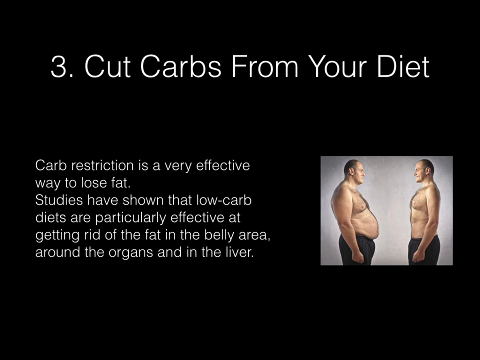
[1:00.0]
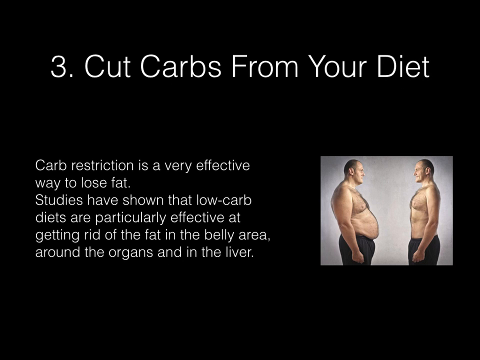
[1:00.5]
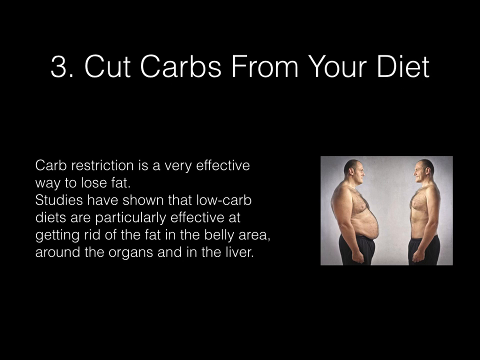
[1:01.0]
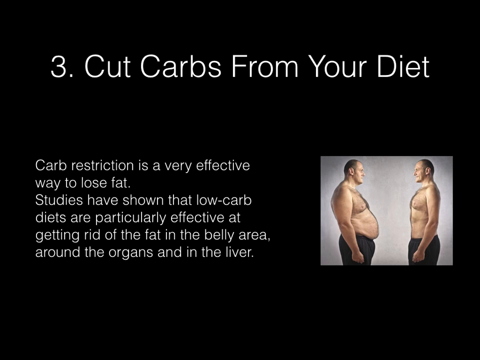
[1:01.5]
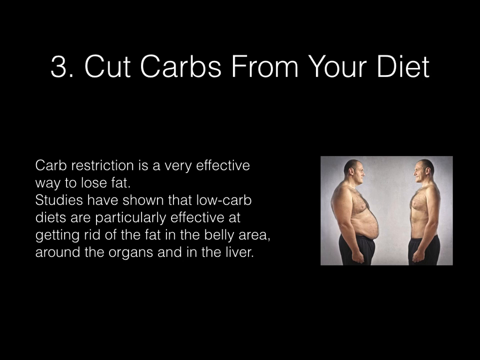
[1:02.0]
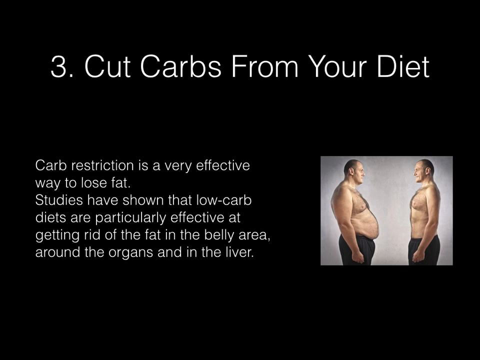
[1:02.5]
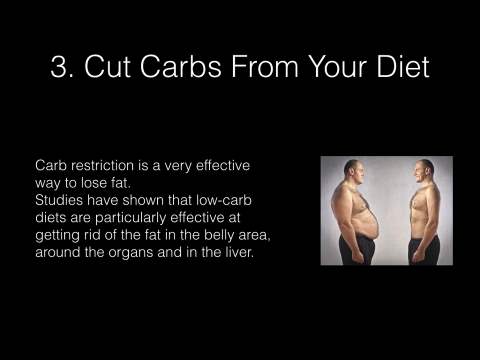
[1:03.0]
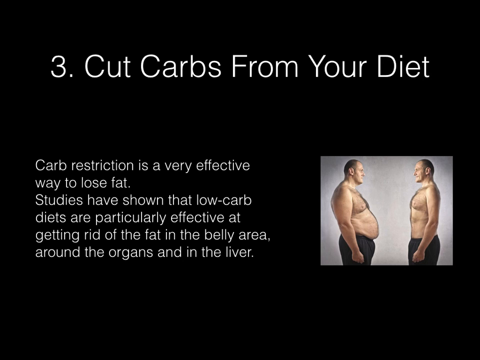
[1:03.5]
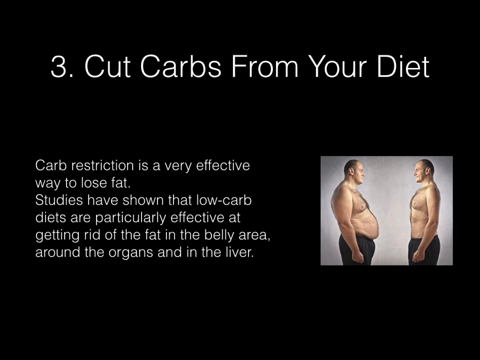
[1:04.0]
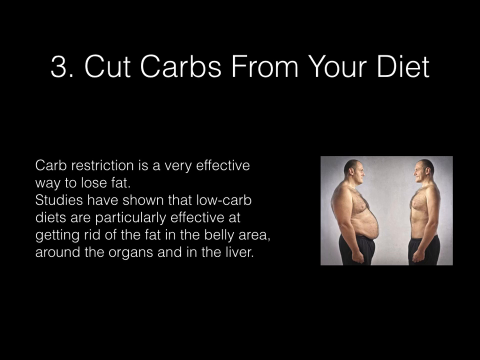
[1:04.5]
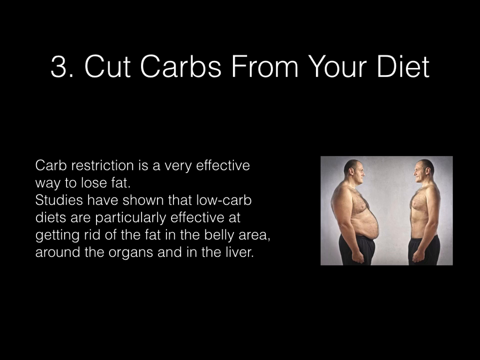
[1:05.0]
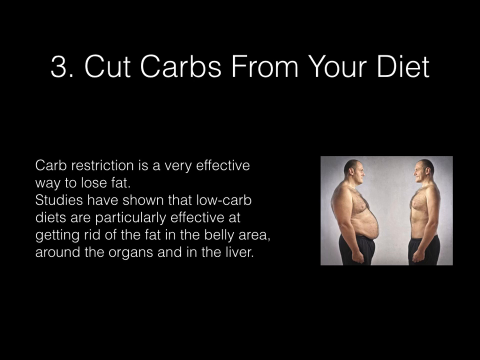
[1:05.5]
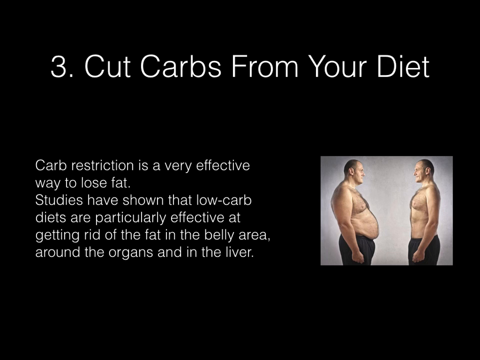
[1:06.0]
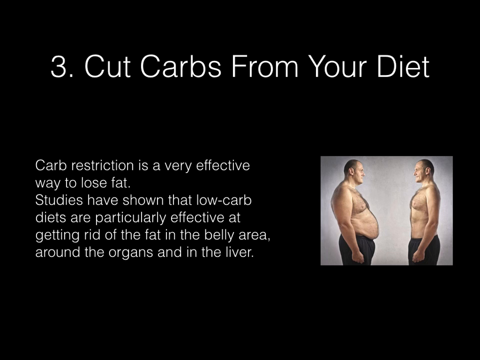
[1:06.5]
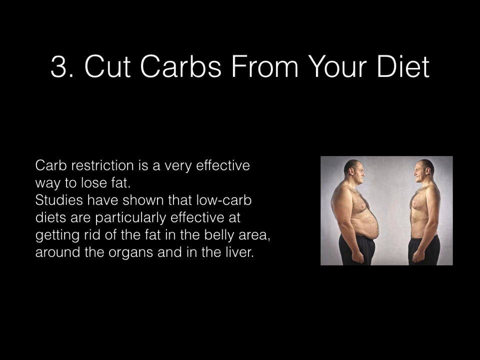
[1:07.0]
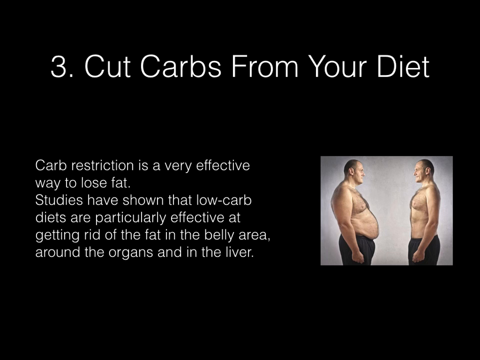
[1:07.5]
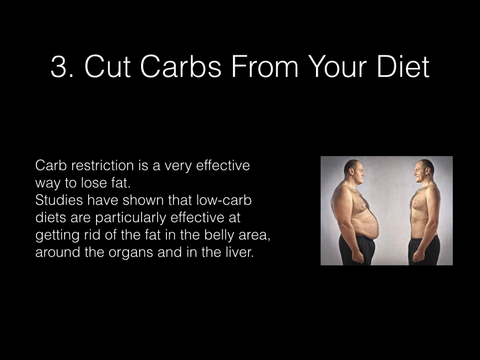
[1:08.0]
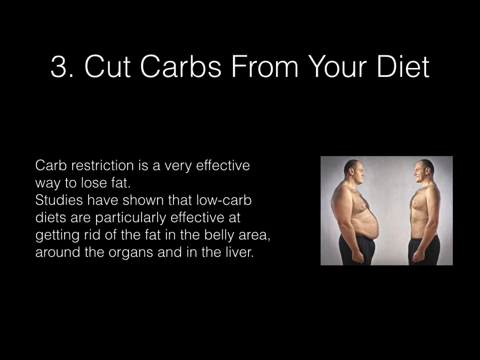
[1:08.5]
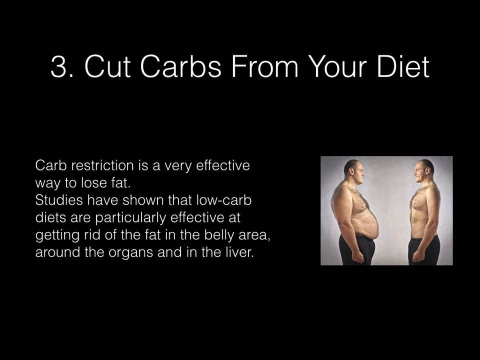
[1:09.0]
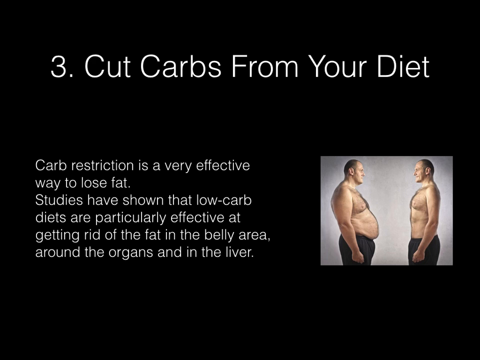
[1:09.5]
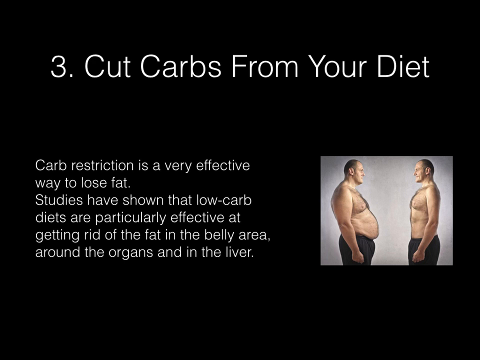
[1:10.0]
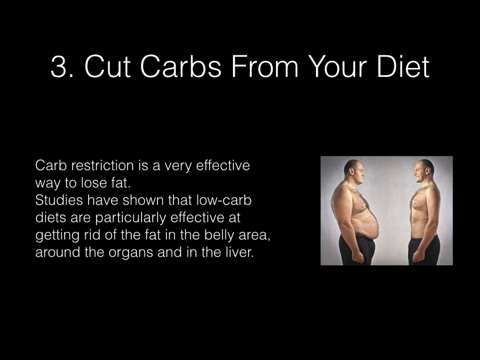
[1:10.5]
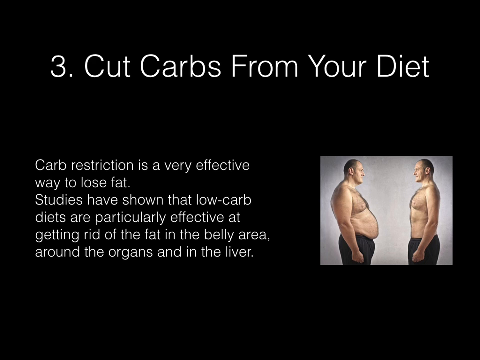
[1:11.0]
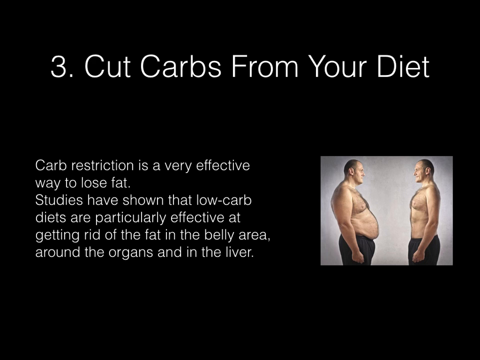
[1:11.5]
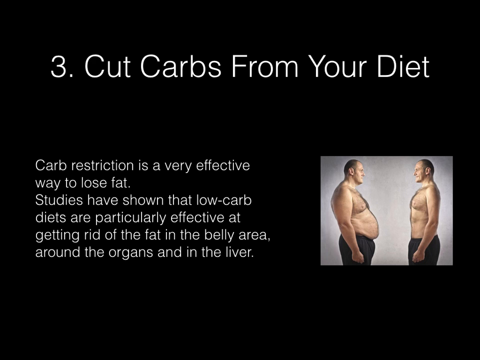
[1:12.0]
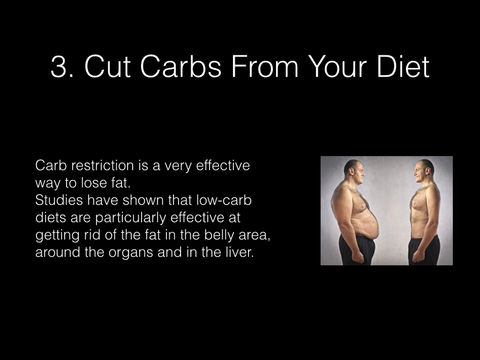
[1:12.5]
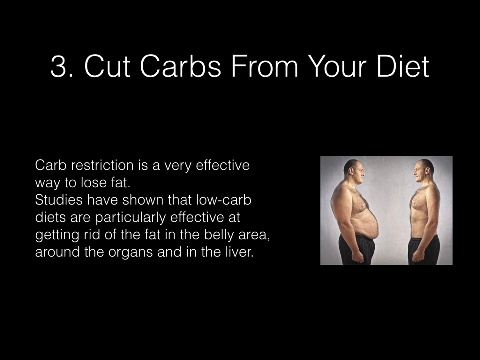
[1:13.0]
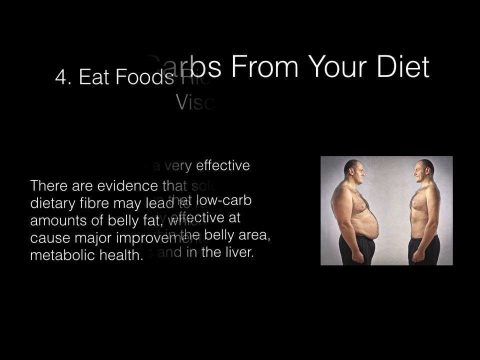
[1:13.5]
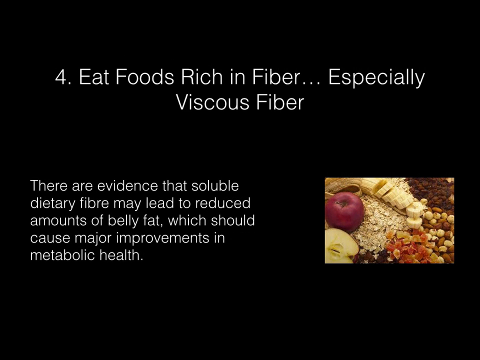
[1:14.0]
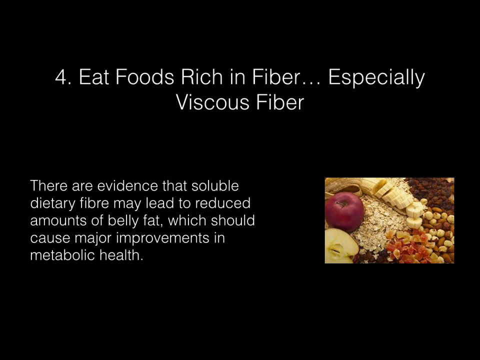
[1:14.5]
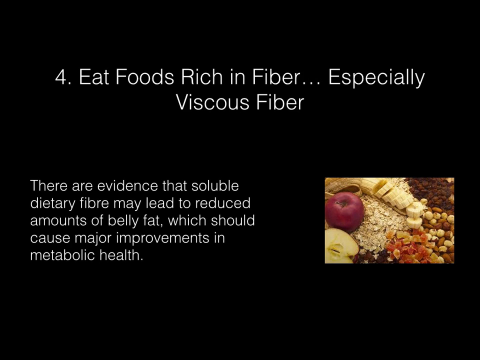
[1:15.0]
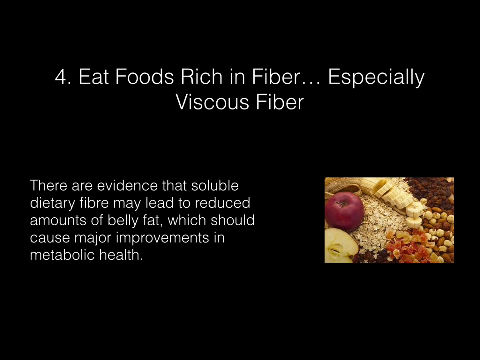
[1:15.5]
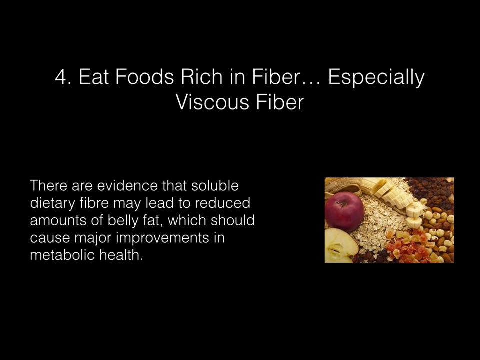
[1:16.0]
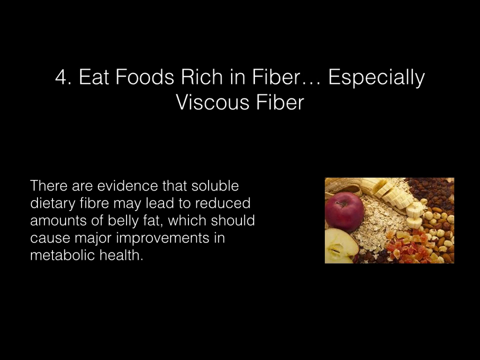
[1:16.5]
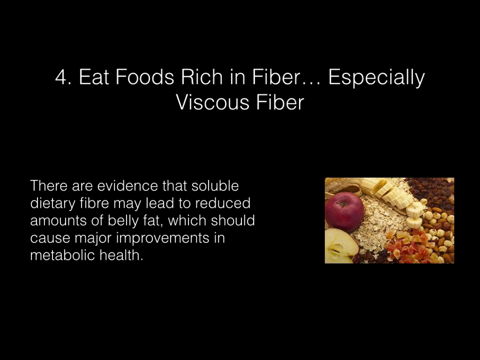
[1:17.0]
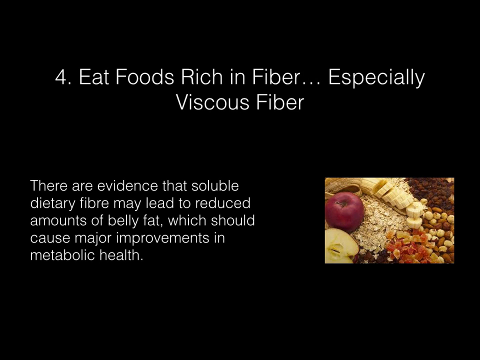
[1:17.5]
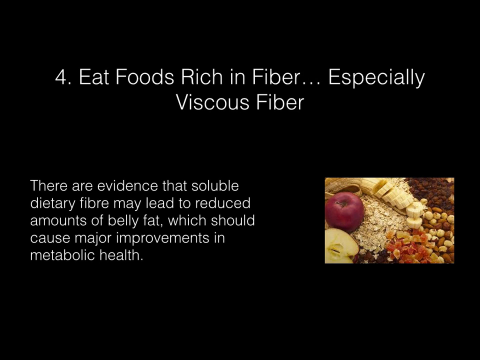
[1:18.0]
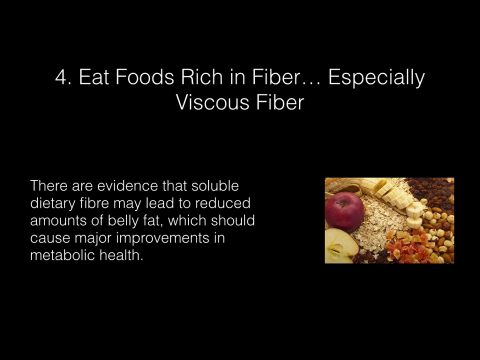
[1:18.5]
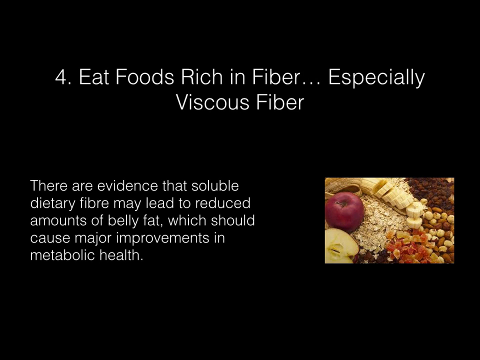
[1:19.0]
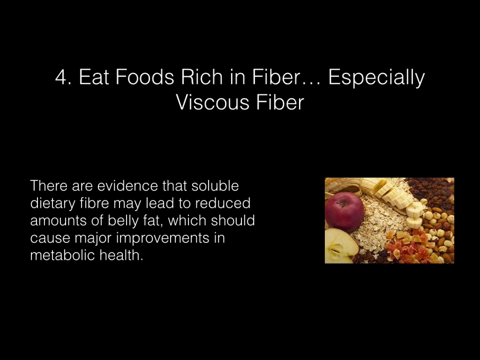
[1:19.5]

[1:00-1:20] This health and fitness video shows a slide reading "number three cut carbs from your diet." On the left, a description reads "carb restriction is a very effective way to lose fat," and below that "studies have shown that low carb diets are particularly effective at getting rid of the fat in the belly area around the organs and in the liver." On the right is a Caucasian man with very short hair who has a lot of belly fat and is pushing his belly out as far as he can, leaning his waist forward to make it look very fat; hair is visible on his chest and belly, and he wears black shorts. To the right is a picture of him slimmed down, with less belly fat and much thinner arms, having lost a lot of weight. Slide number four then appears, reading "eat foods rich in fiber especially viscous fiber," and on the lower part "there are evidence that soluble dietary fiber may lead to reduced amounts of belly fat which should cause major improvements in metabolic health." On the right is a picture of healthy foods: an apple, an apple sliced open, oats, a sliced banana and various other items.